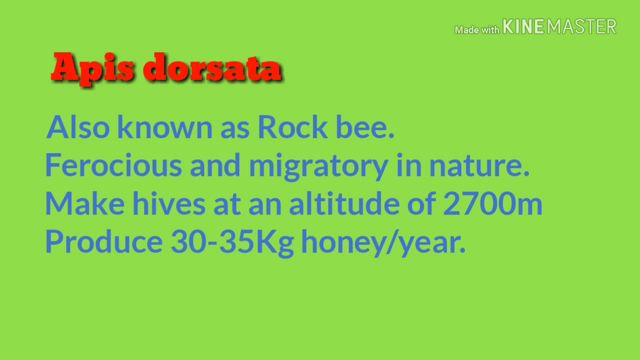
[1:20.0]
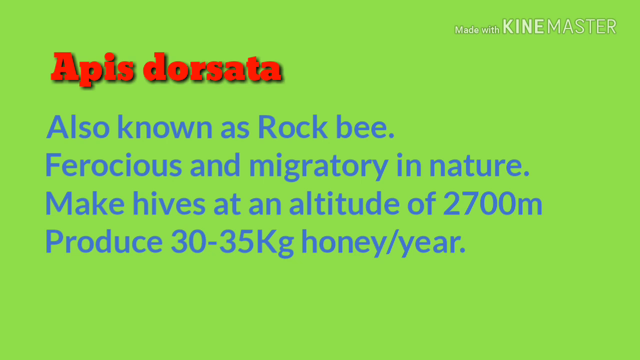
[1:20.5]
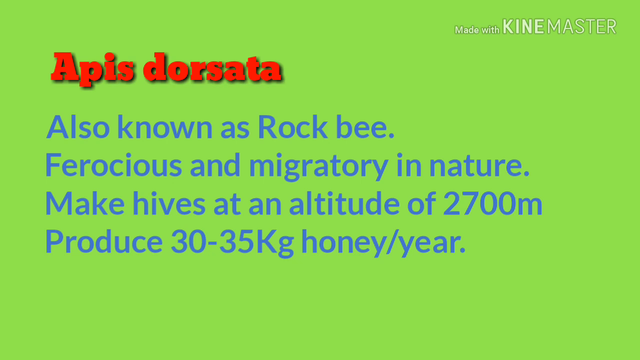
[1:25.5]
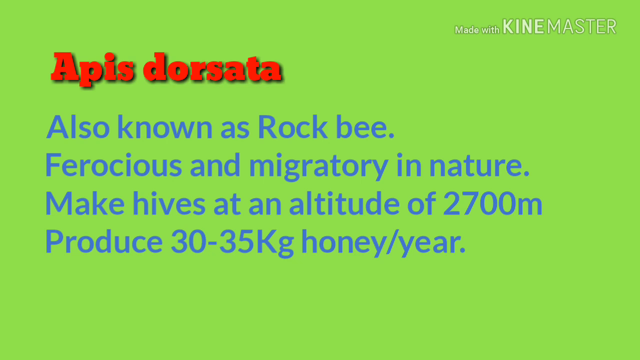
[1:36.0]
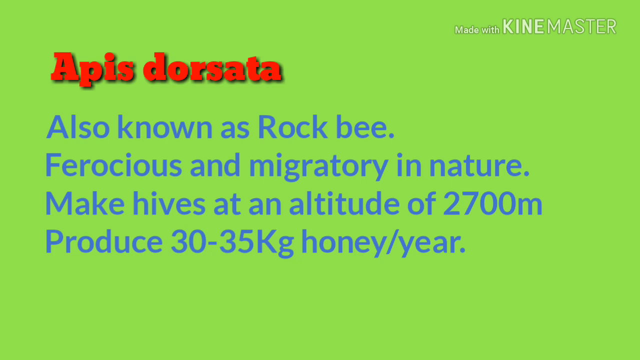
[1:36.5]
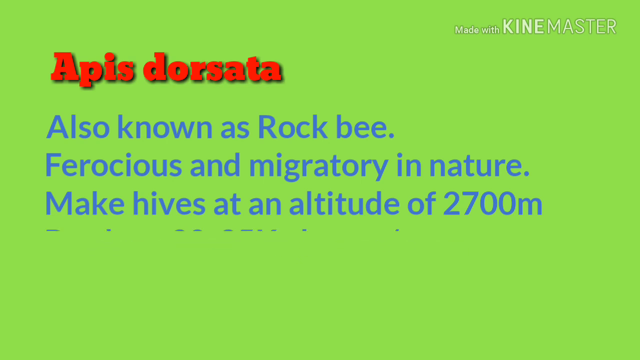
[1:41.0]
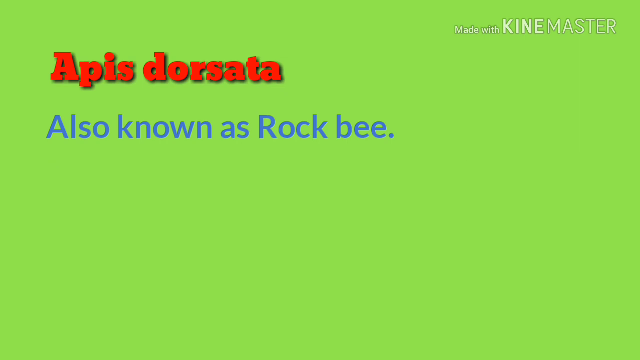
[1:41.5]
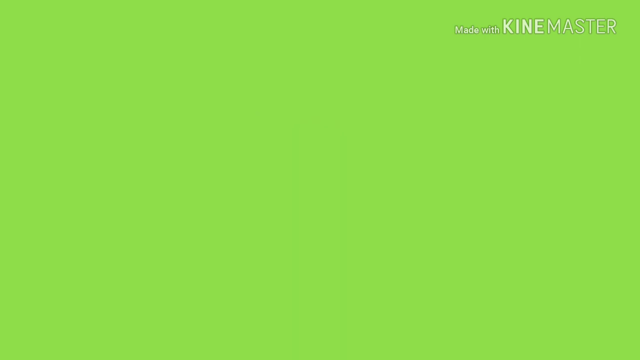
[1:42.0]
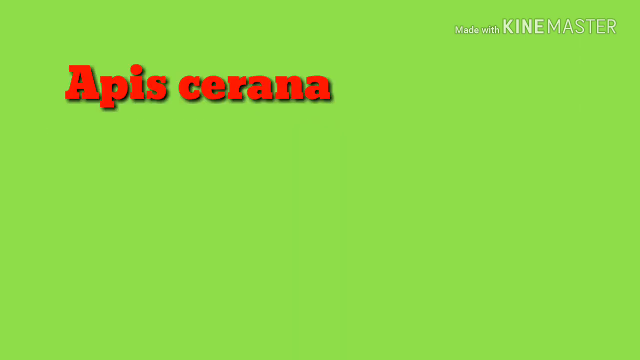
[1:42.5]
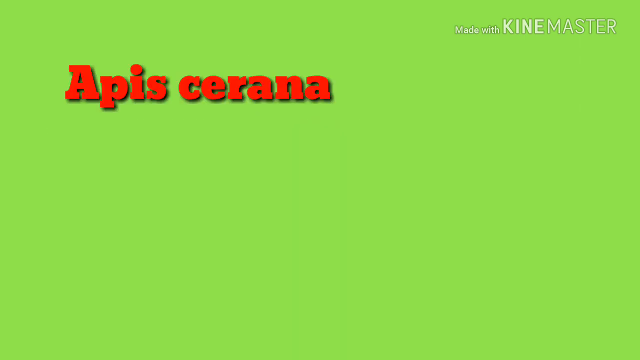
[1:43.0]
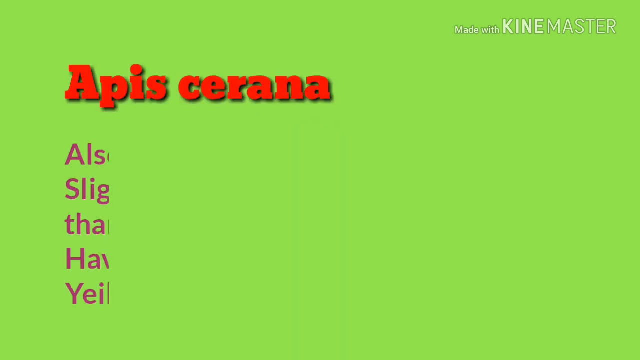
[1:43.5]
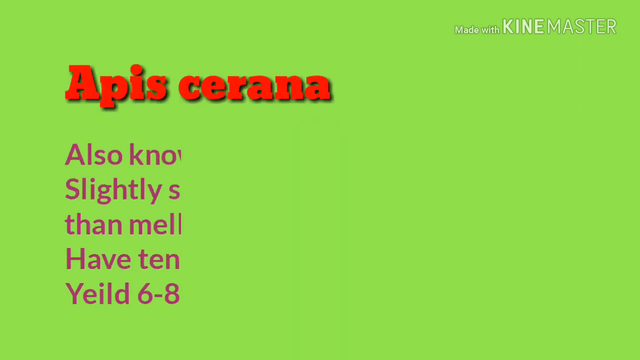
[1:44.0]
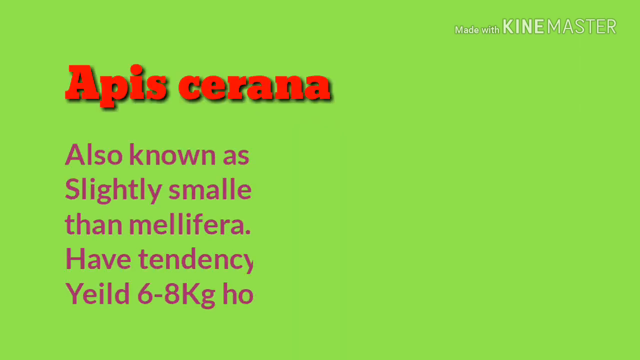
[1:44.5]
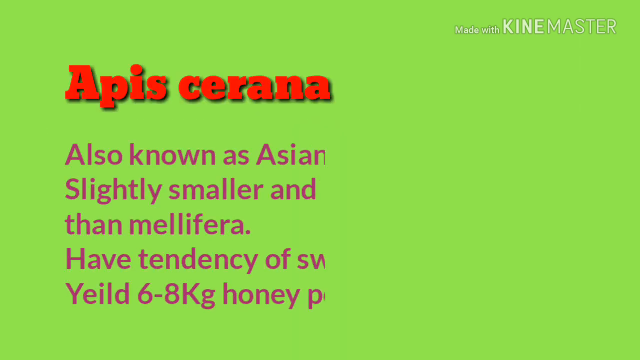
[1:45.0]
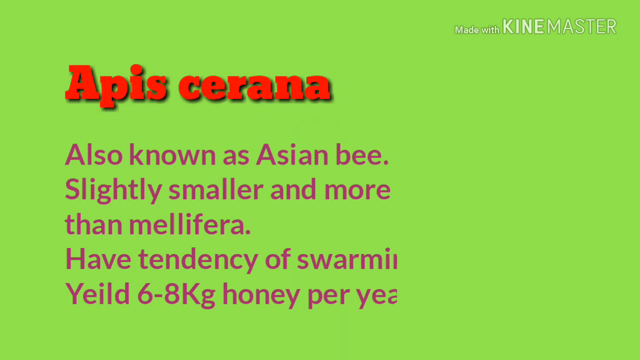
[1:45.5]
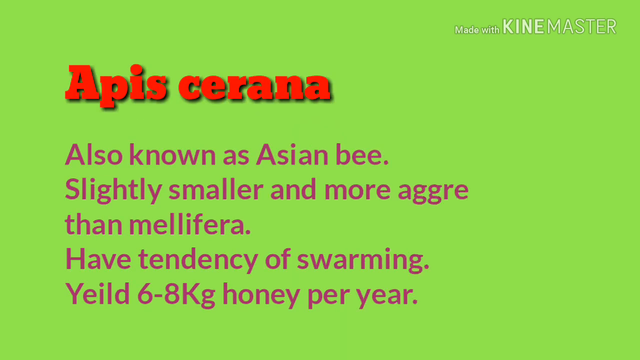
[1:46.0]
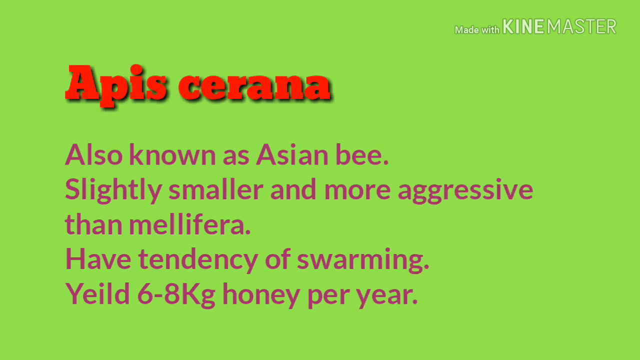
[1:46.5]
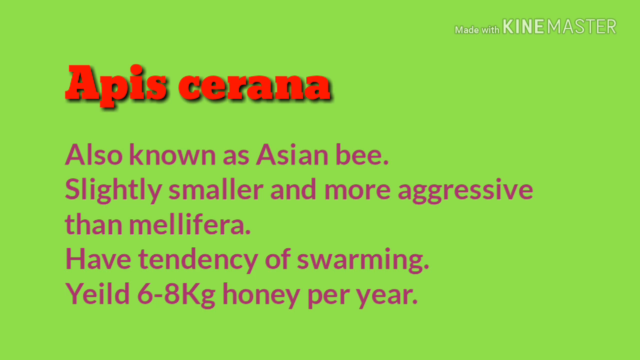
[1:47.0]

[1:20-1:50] "Apis dorsata" is written in red, and "made with KineMaster" is still in the top right corner in white. Points in blue read "also known as rockbee", "ferocious and migratory in nature", a line ending "at an altitude of 2700m", and "produce 30-35kg only per year", all on a green background. The video fades and shows new text: "Apis cerana" in red, followed by lines in wine or burgundy: "also known as Asian bee", "slightly smaller and more aggressive than mellifera", "have tendency of swarming" and "yield 6-8kg only per year", with "yield" spelled "yeild".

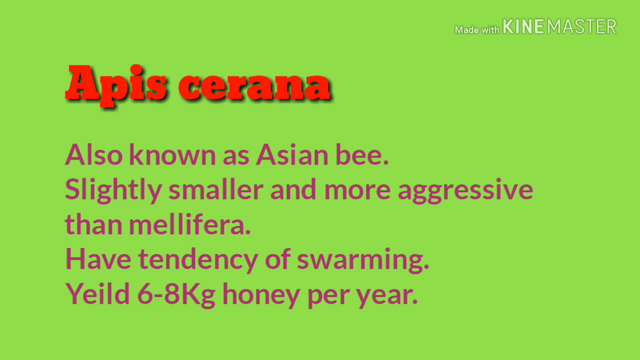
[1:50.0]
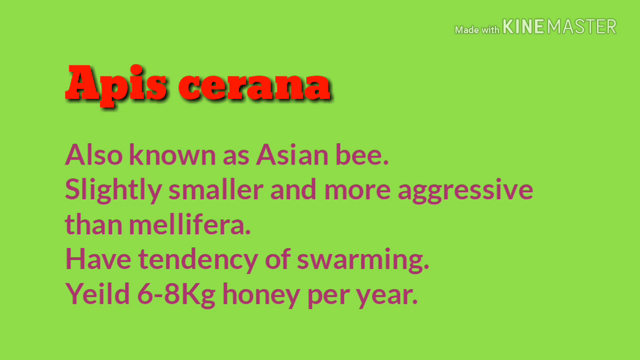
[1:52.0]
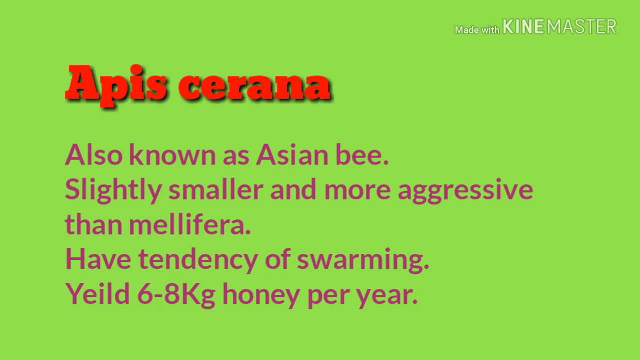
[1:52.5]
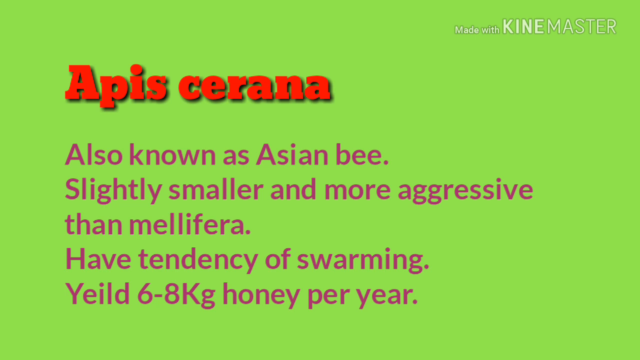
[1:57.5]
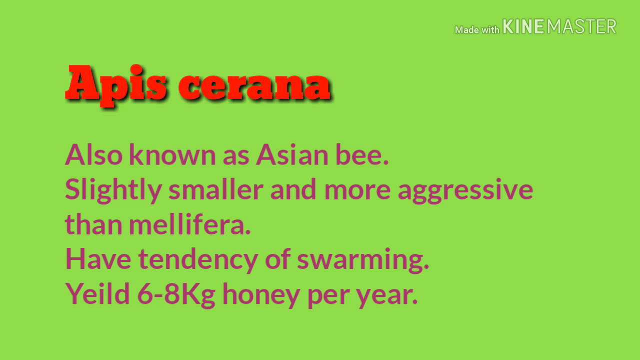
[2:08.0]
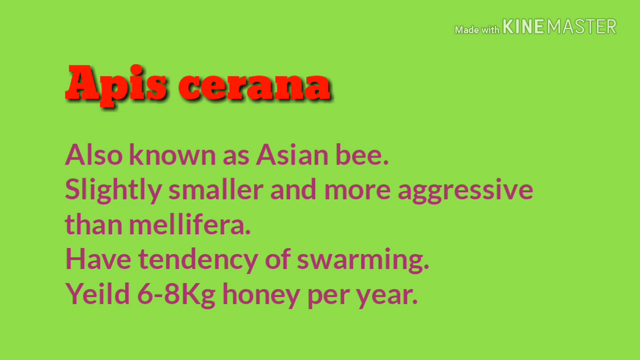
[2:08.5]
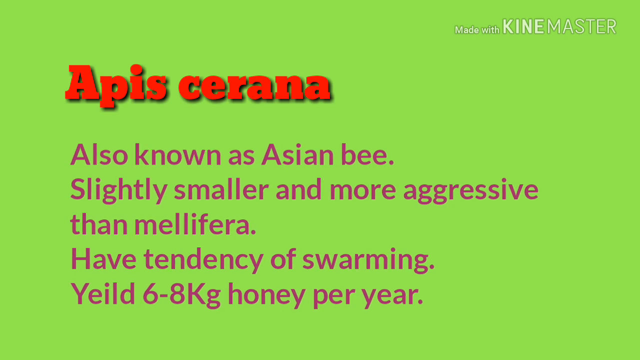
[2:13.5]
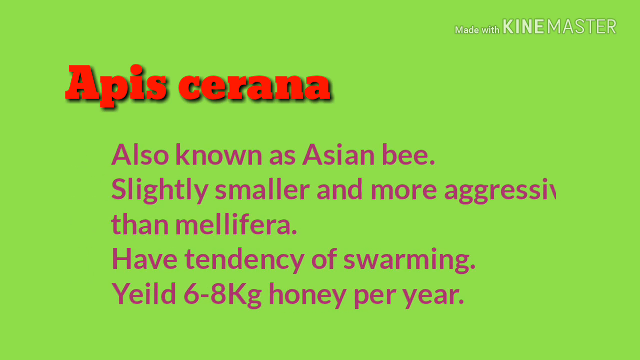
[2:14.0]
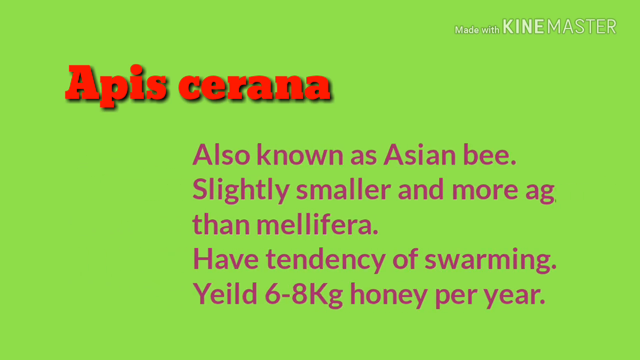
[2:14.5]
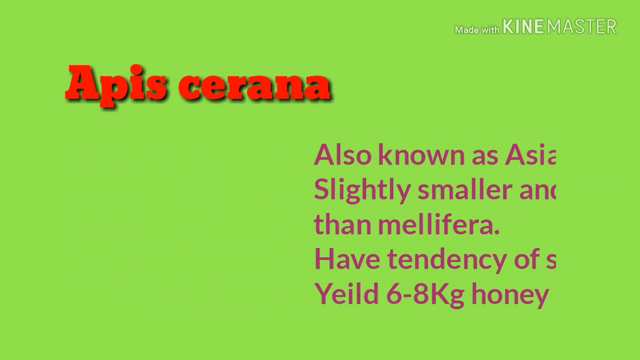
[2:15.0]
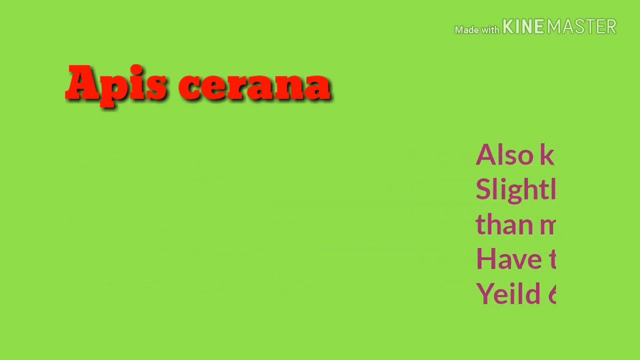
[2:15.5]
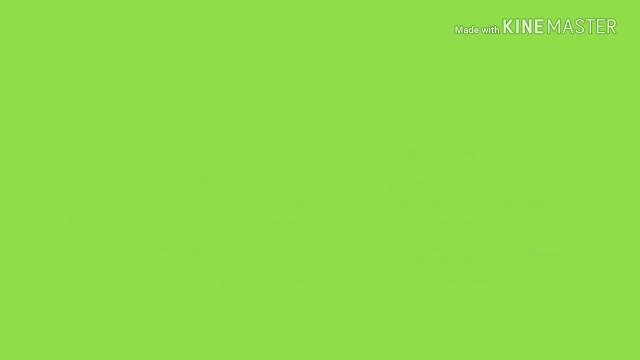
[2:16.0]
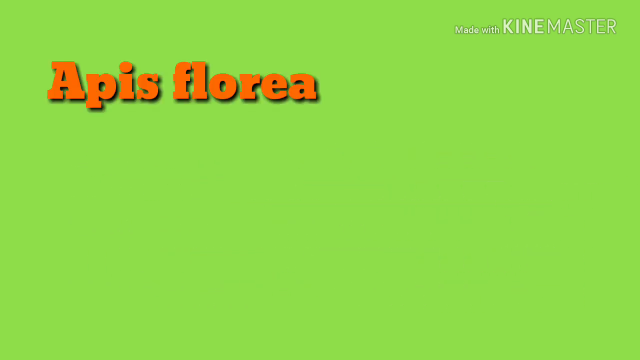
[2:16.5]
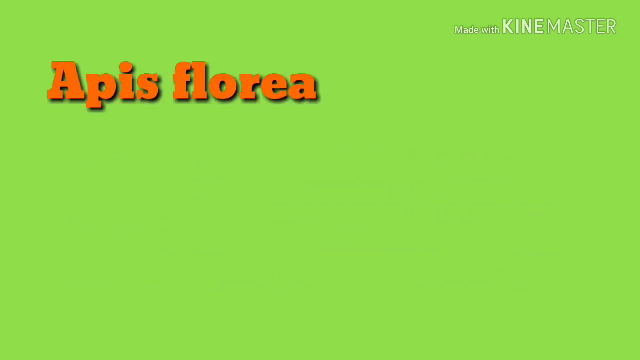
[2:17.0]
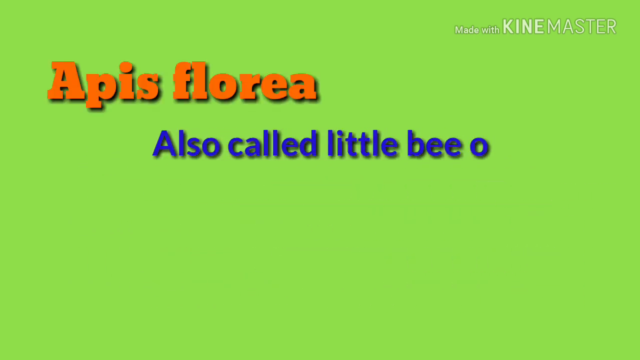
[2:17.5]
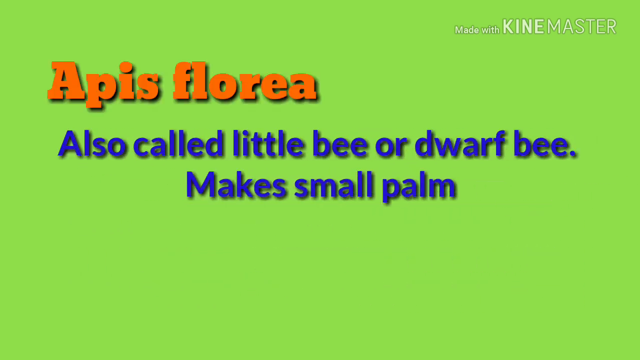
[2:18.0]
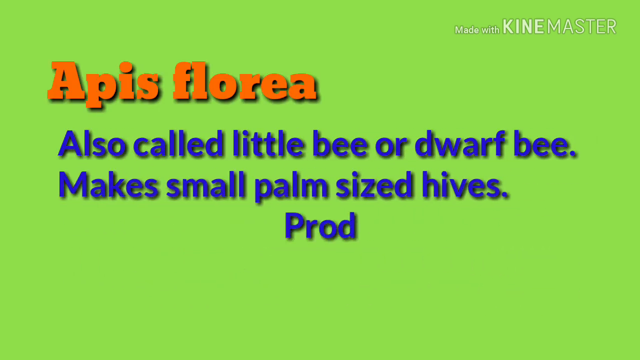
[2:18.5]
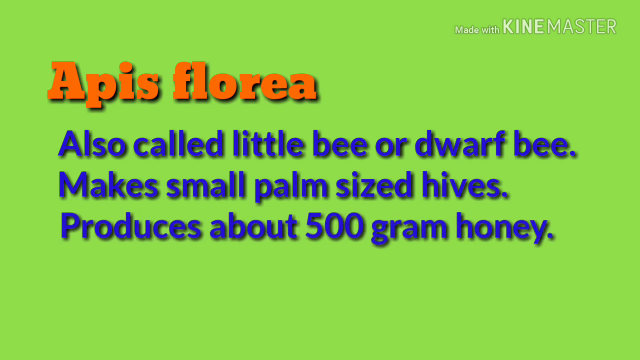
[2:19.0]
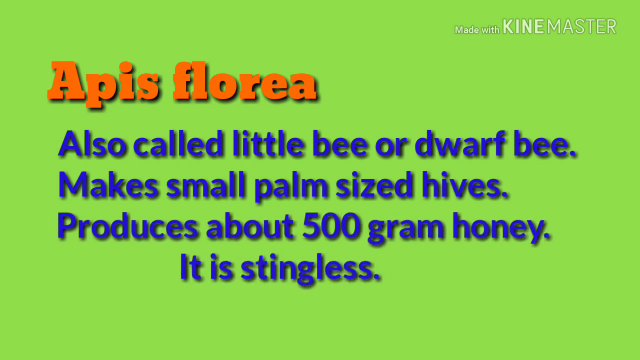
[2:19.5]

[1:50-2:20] "Apis cerana" is written in red, with burgundy lines reading "also known as Asian Bee", "slightly smaller and more aggressive than Melifera", "have a tendency of swarming" and "yield 6 to 8 kg only per year", with "yield" spelled "yeild". At the top right corner it says "made with kine masters" in white, all on a green background. The video transitions to "Apis florea" in orange, and blue lines slide onto the screen: "also called little bee or dwarf bee", "makes small palm sized hives", "produces about 500 gram honey" and "it is stingless". The background remains green.